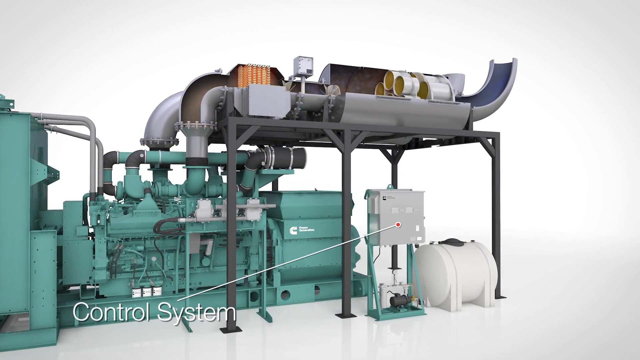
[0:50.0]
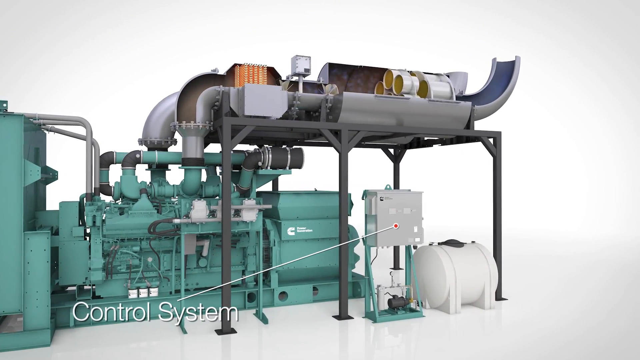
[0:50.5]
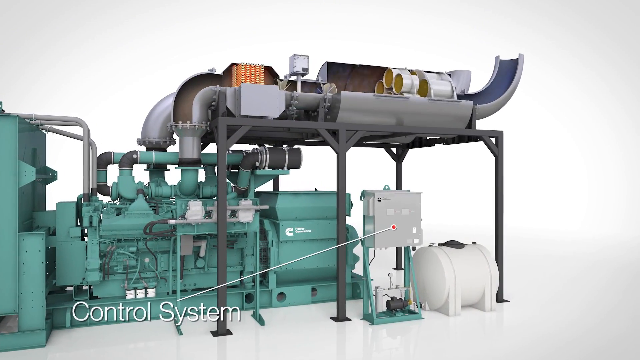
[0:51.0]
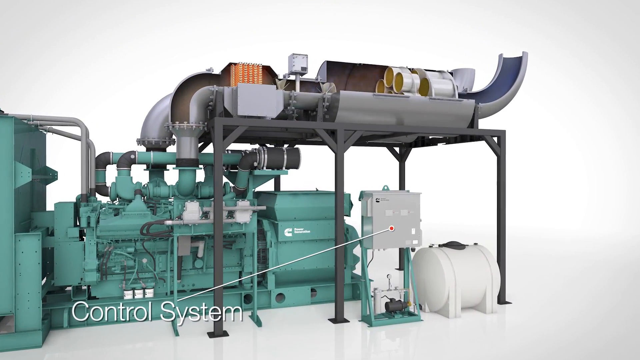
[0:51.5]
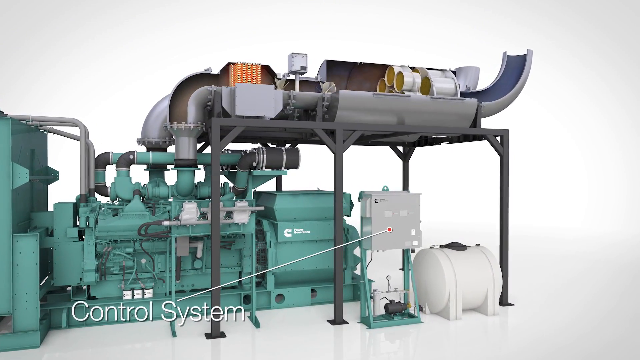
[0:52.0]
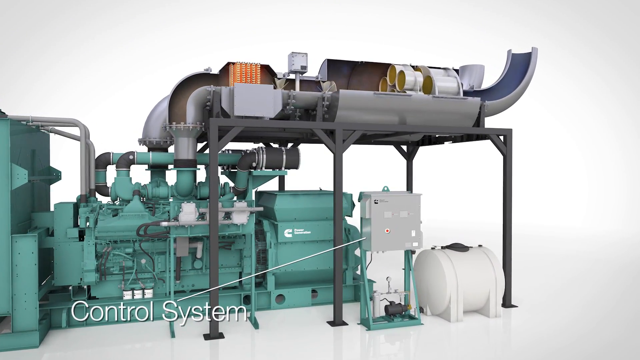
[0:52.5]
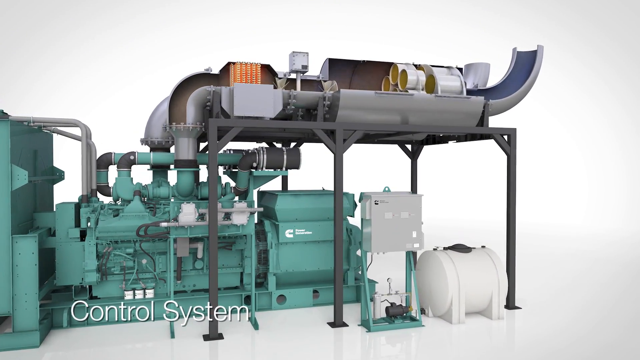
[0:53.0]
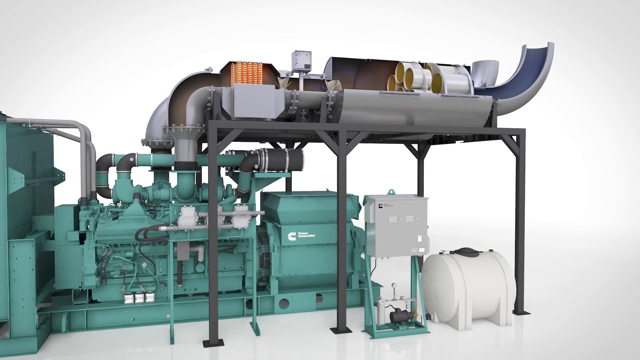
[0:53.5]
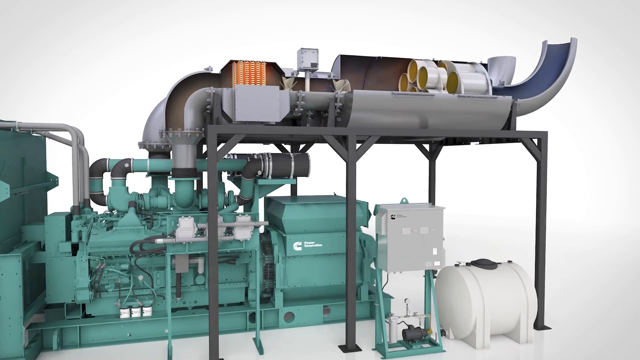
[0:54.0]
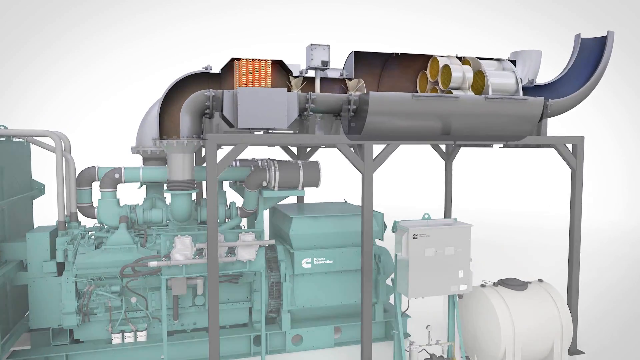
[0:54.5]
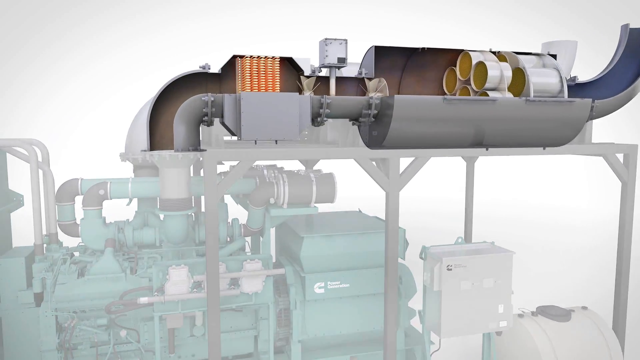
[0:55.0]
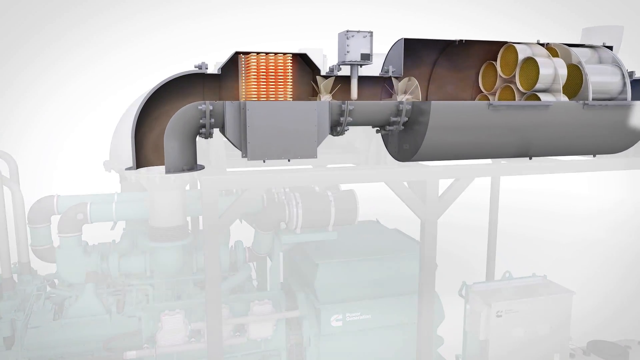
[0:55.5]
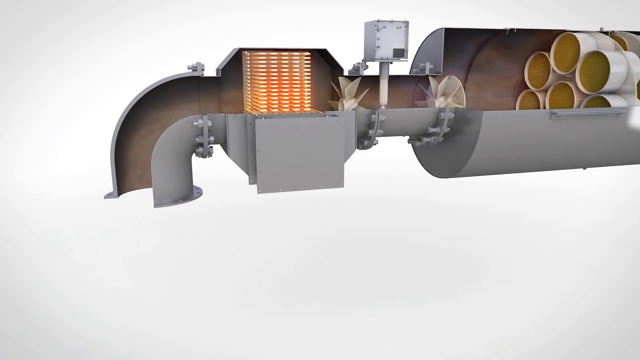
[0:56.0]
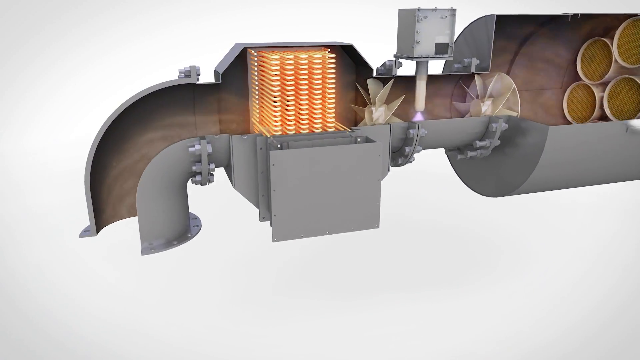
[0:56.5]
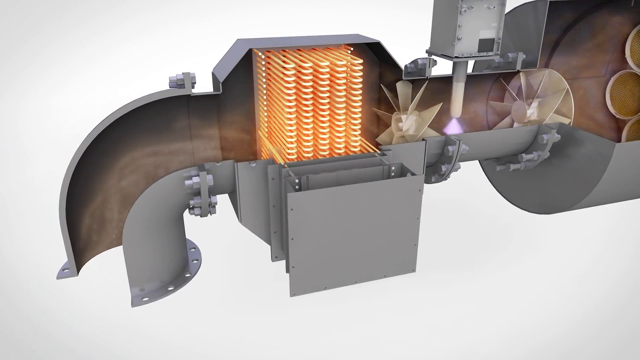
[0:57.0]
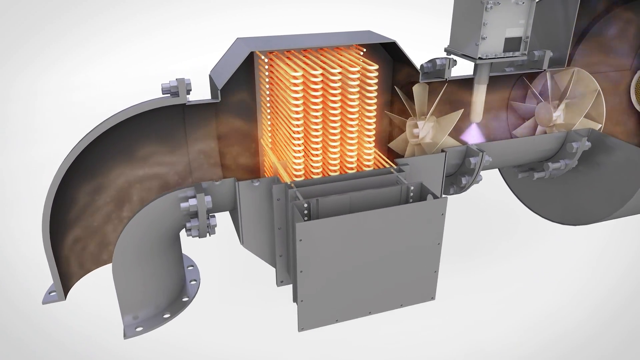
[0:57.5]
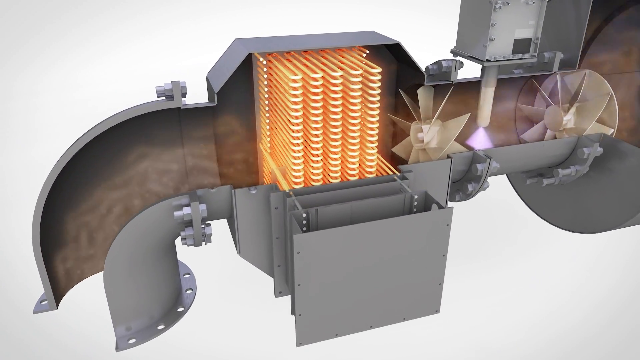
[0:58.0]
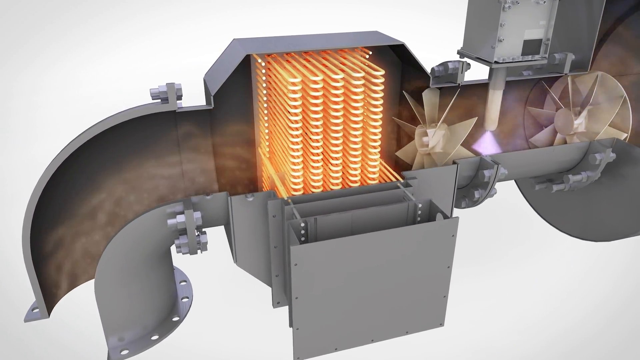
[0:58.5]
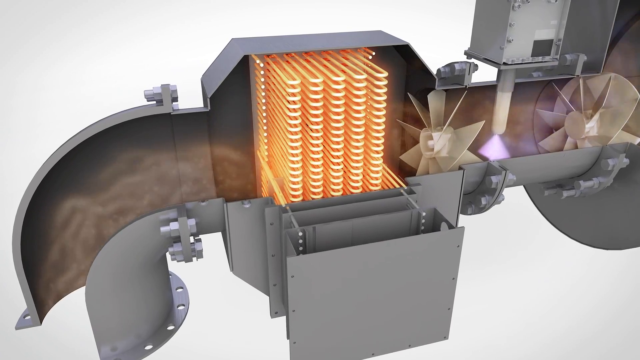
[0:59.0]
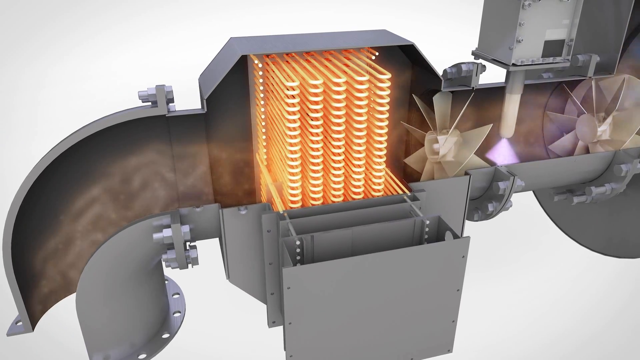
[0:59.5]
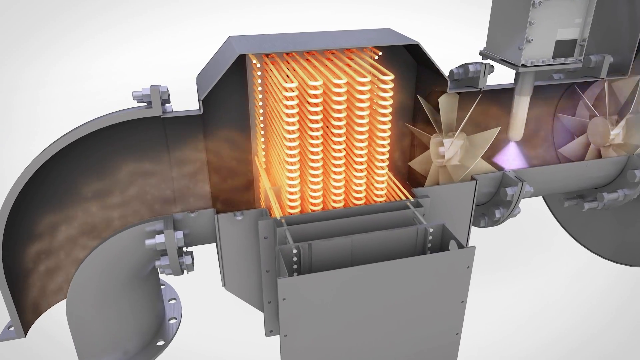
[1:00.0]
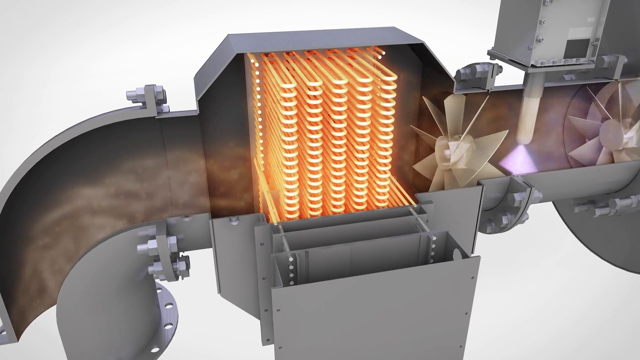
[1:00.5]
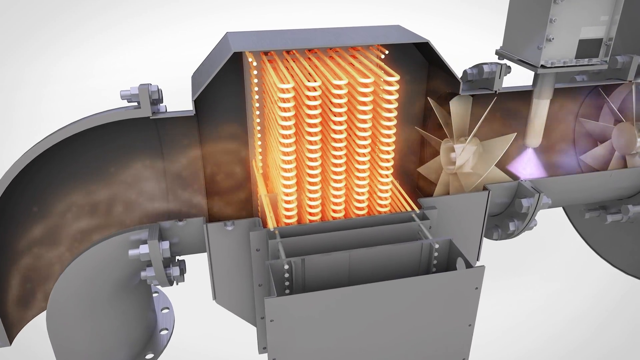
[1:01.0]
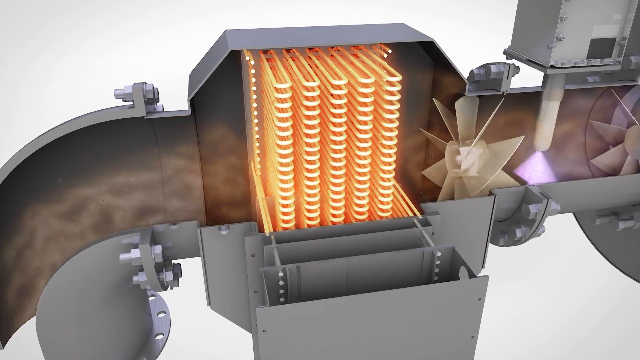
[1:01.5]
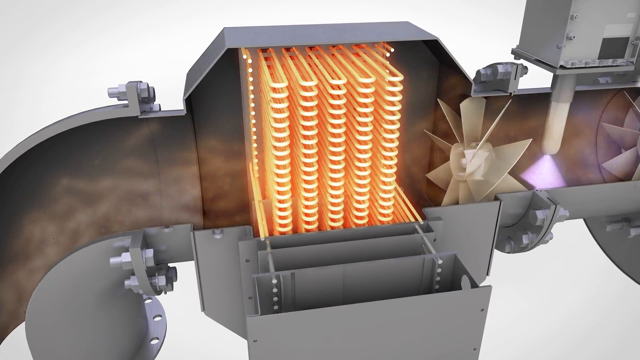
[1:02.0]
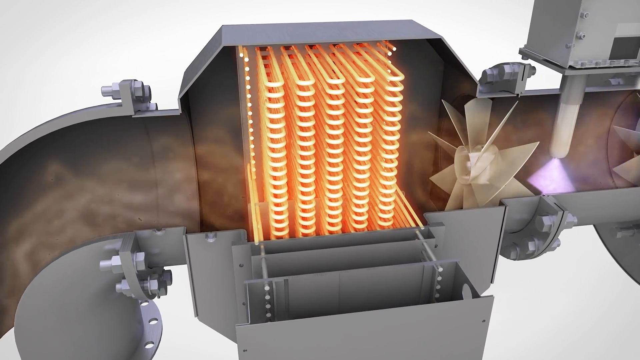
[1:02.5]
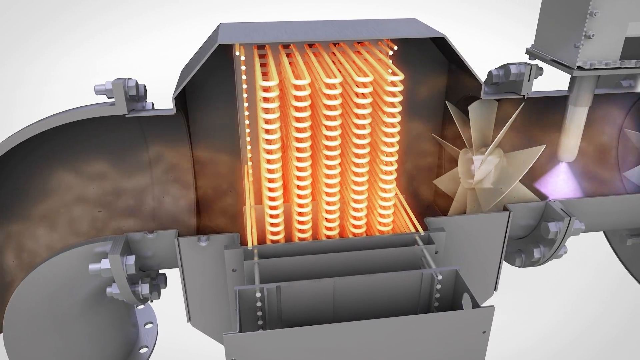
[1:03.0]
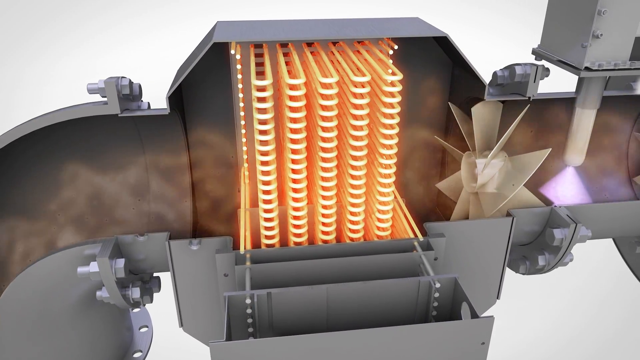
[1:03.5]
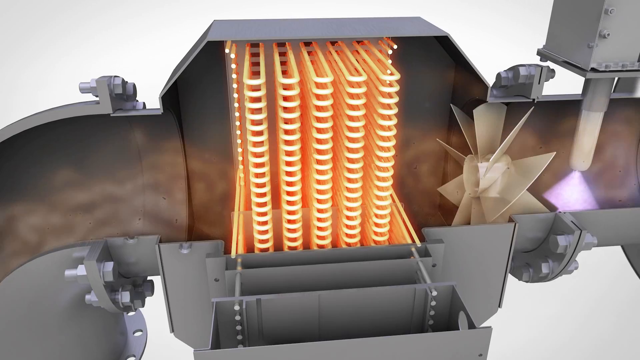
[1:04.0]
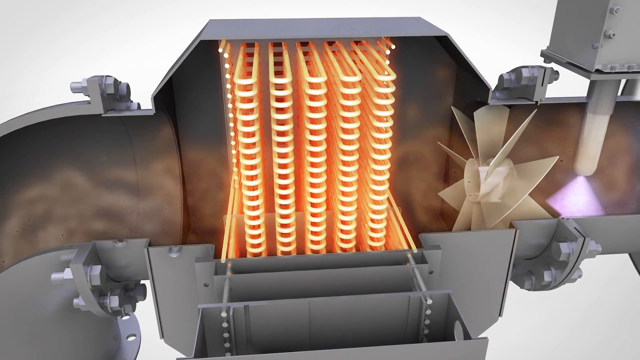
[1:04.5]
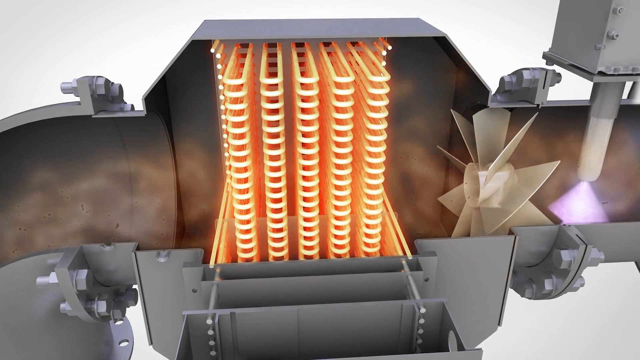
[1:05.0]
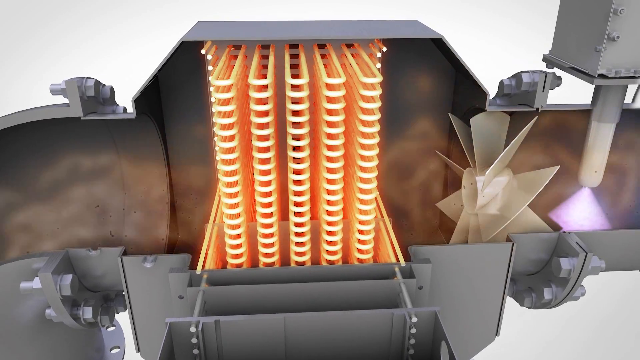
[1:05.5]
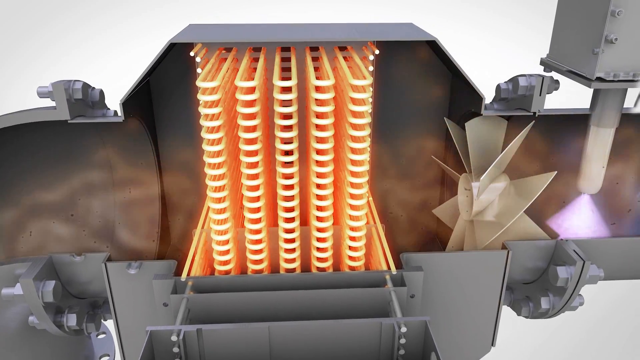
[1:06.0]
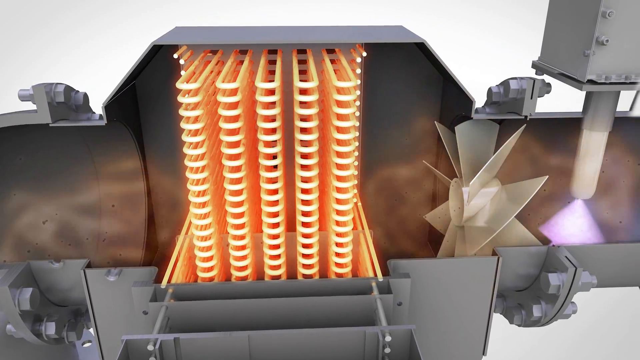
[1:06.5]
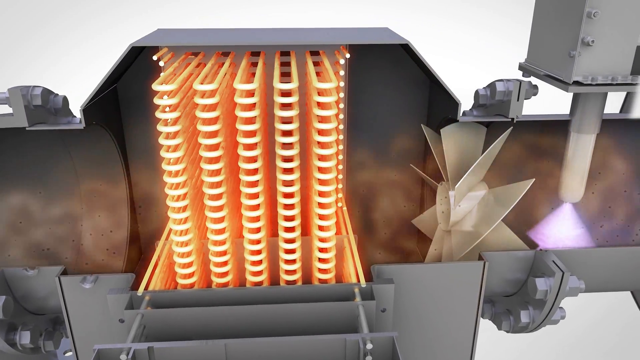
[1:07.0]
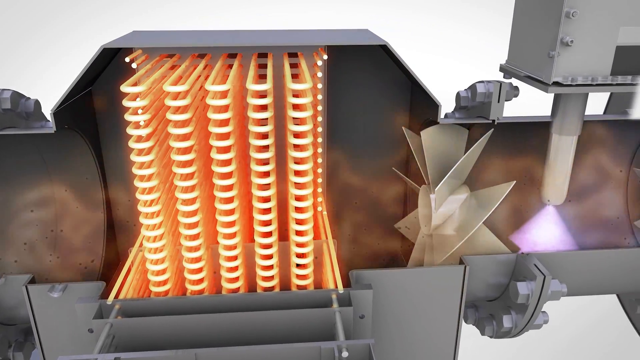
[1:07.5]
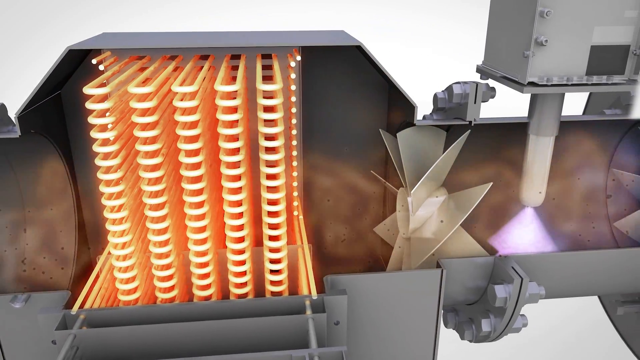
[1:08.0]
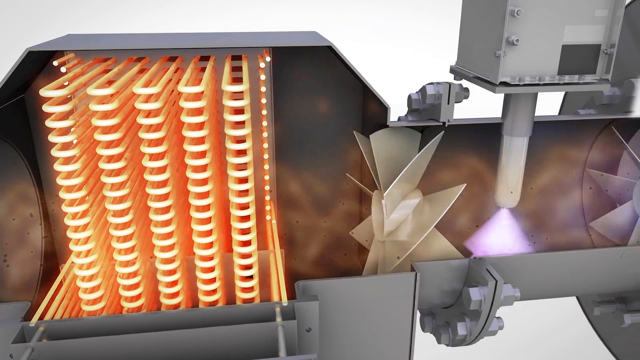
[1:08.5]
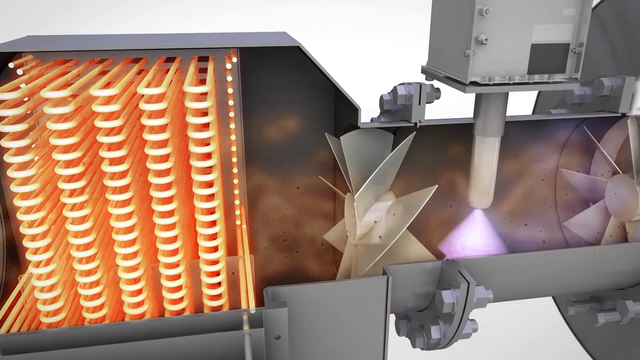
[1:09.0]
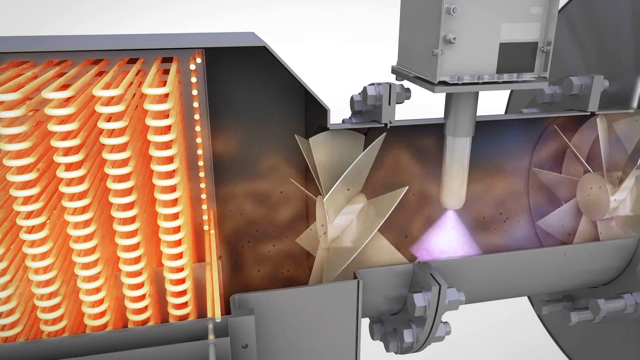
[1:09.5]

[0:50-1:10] A white line arrow points to what is apparently a gray box below, labeled as the control system. The video then zooms in on the large gray cylinder pipe, where an animation shows orange air flowing through the preheat filter, which glows. The air leads to what looks to be two fans, which are not rotating. Zoomed into the exhaust pre-filter, there are red glowing coils stacked on top of each other in five columns and many rows, somewhere over 10 to 20. The fans have around eight blades and do not move. Another little tube drops into the large pipe with an upside-down purple cone on it, which looks kind of like an upside-down funnel.